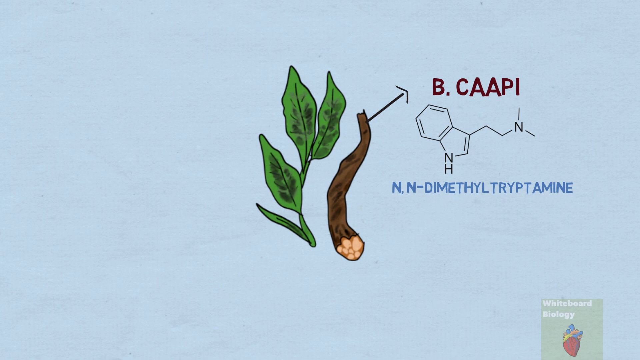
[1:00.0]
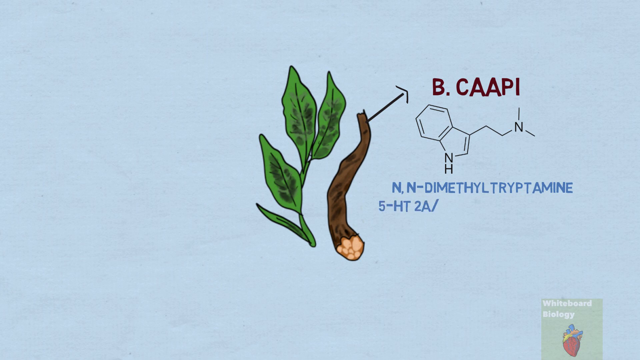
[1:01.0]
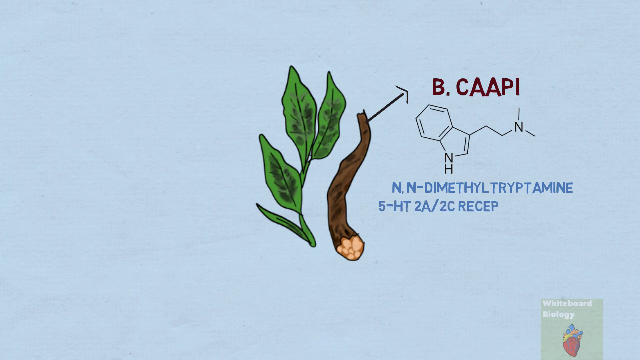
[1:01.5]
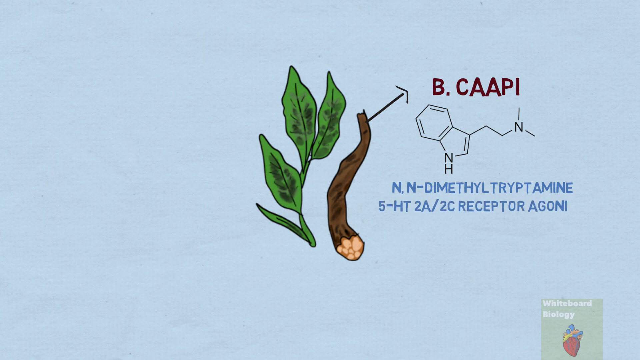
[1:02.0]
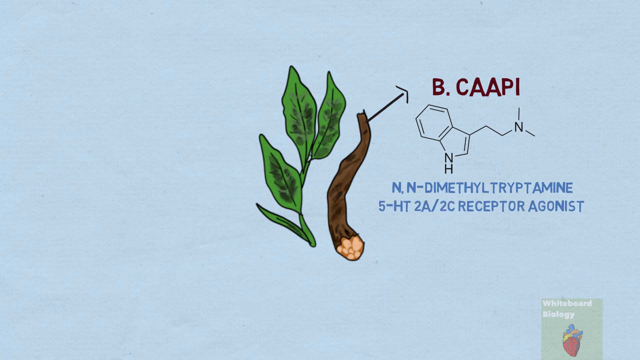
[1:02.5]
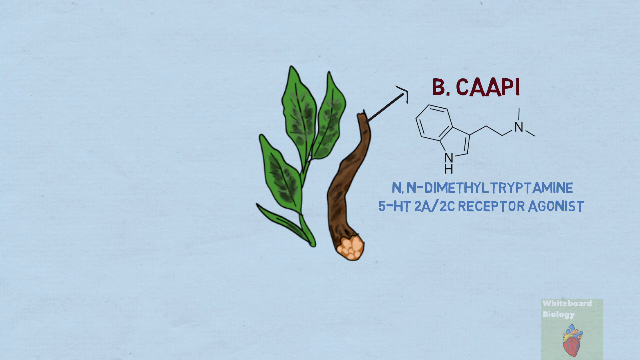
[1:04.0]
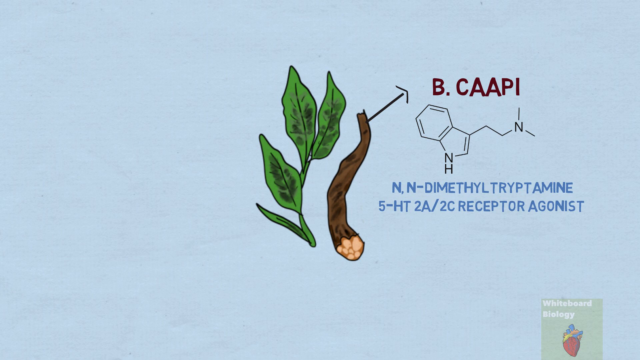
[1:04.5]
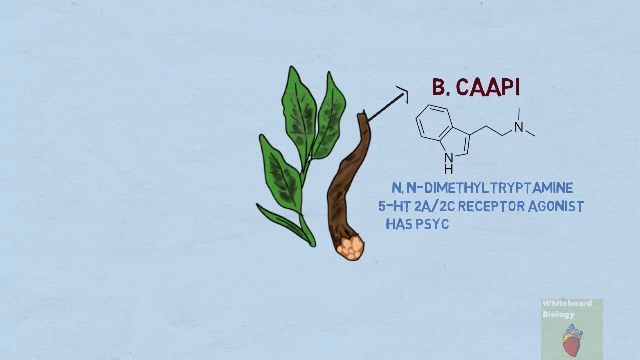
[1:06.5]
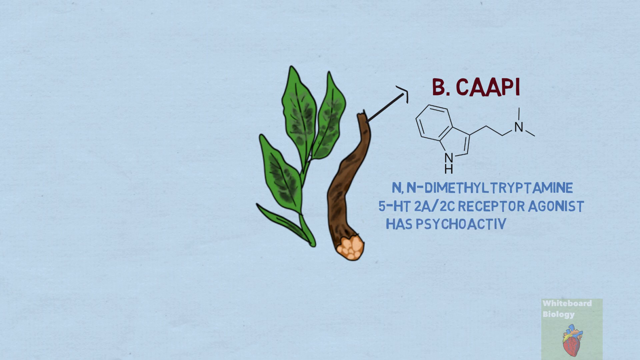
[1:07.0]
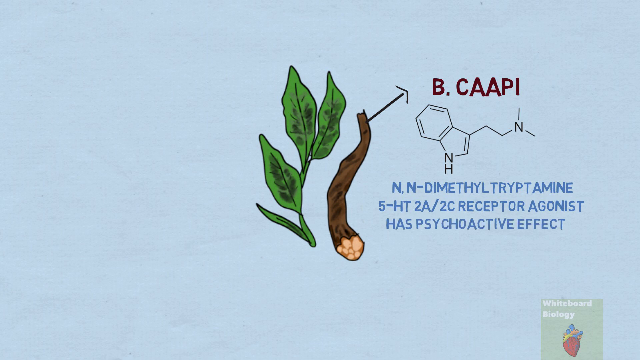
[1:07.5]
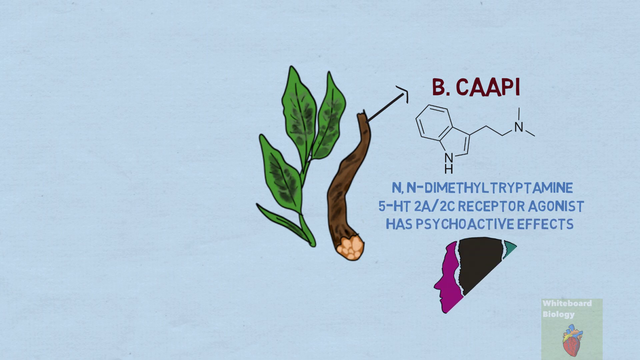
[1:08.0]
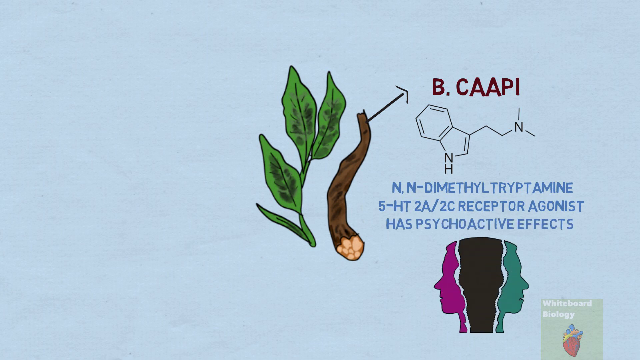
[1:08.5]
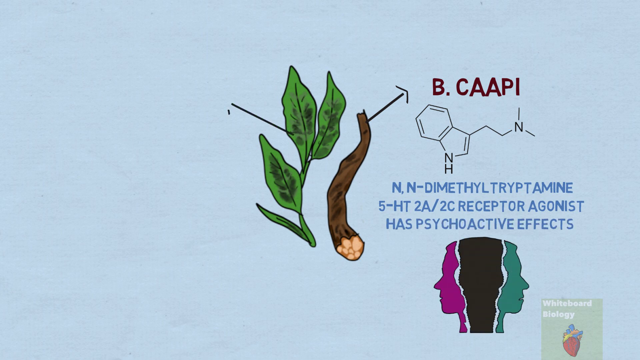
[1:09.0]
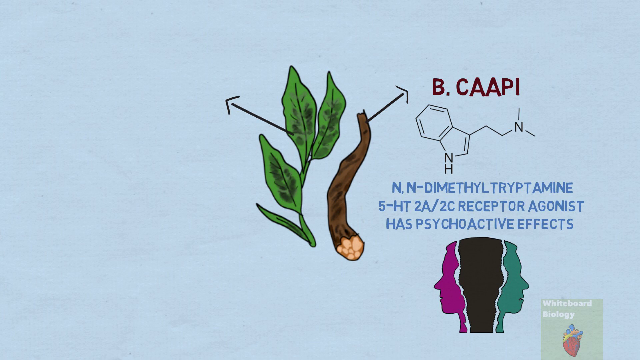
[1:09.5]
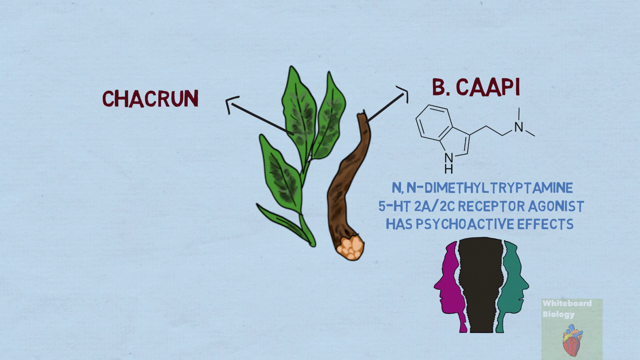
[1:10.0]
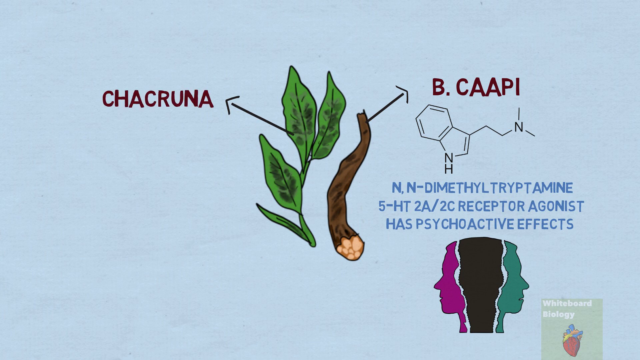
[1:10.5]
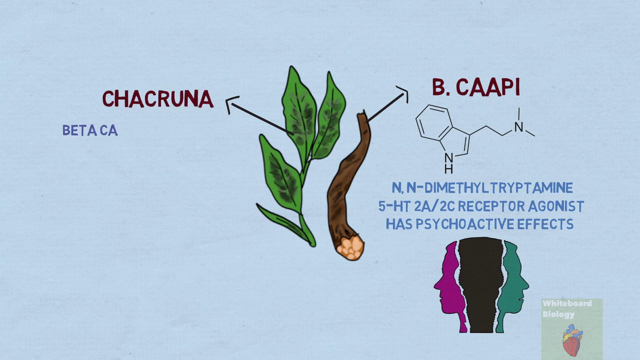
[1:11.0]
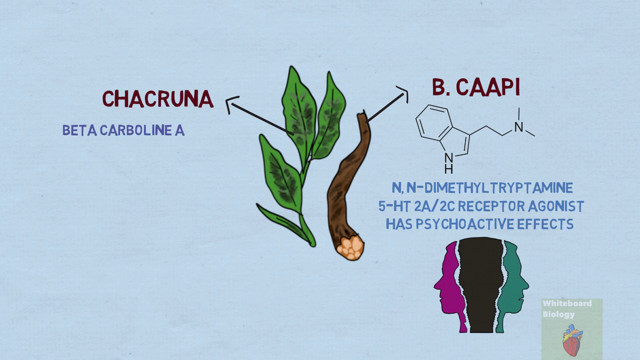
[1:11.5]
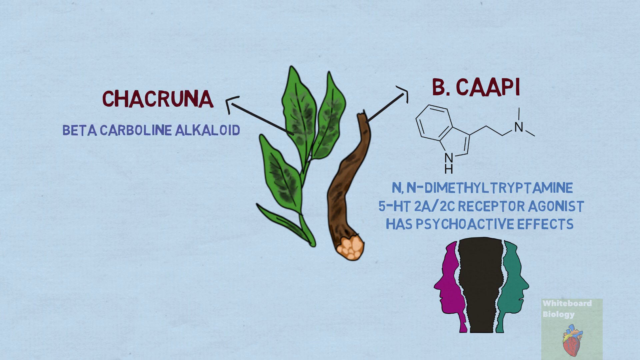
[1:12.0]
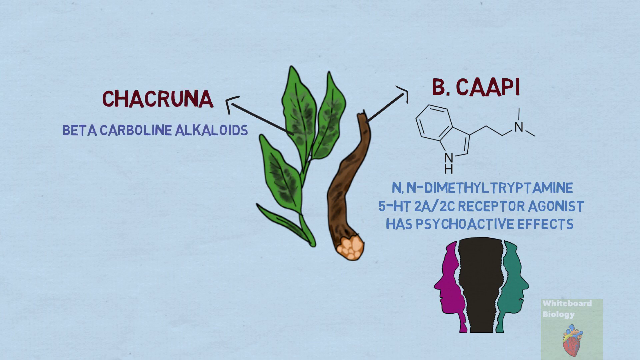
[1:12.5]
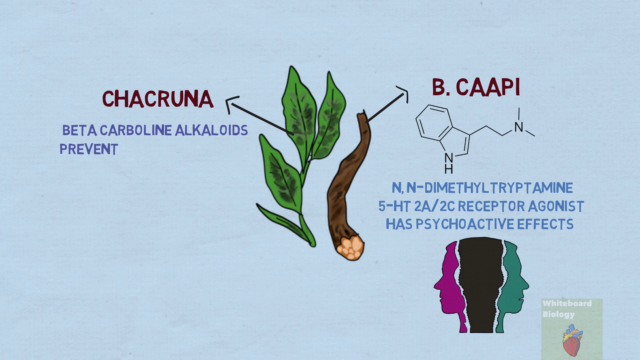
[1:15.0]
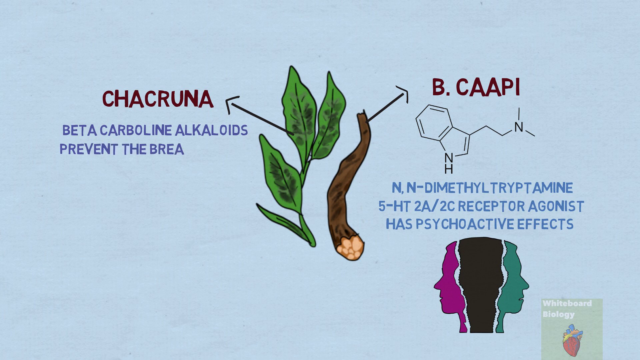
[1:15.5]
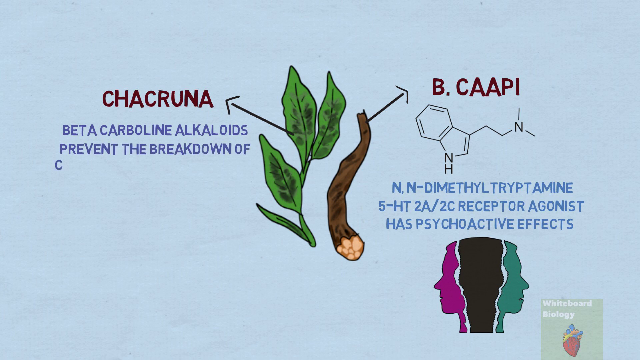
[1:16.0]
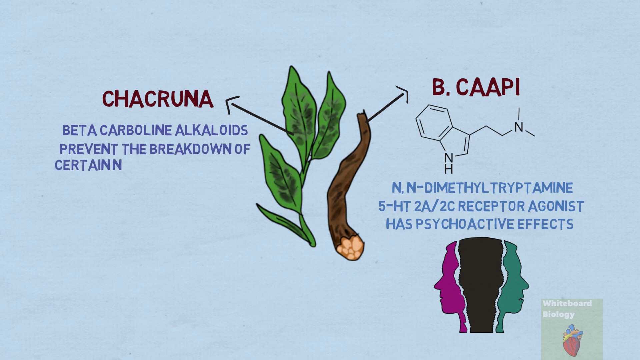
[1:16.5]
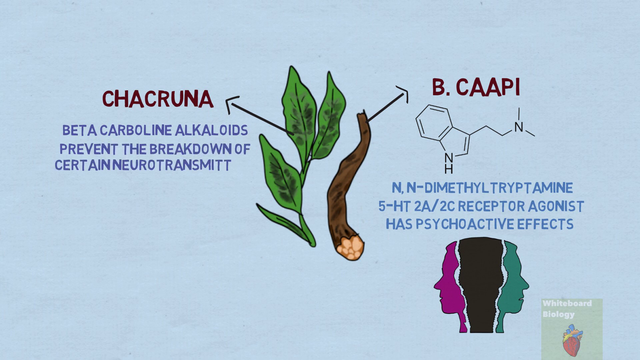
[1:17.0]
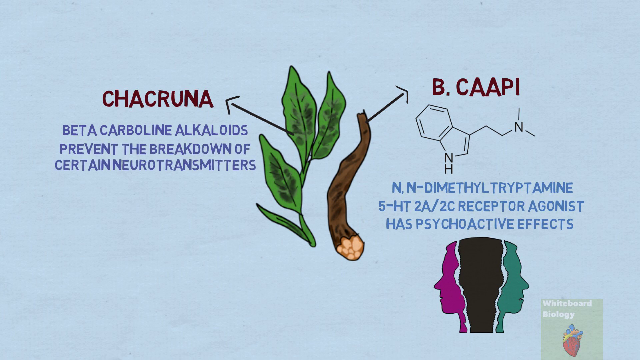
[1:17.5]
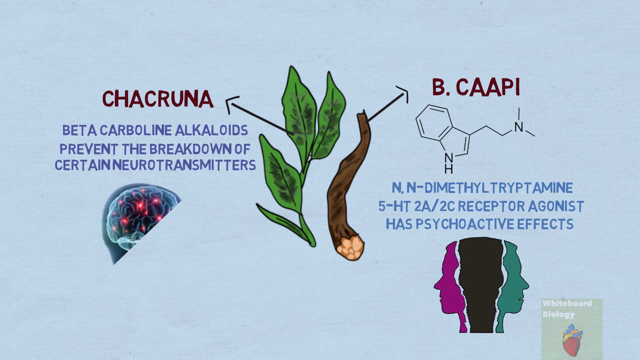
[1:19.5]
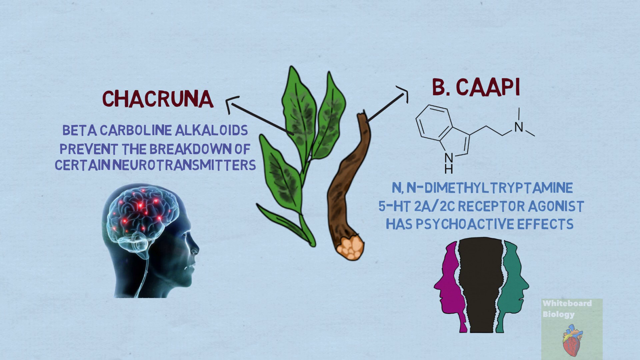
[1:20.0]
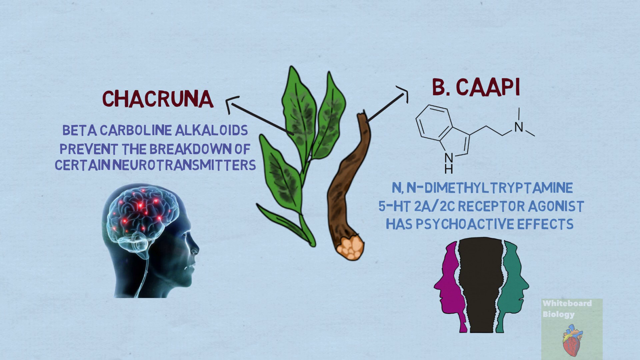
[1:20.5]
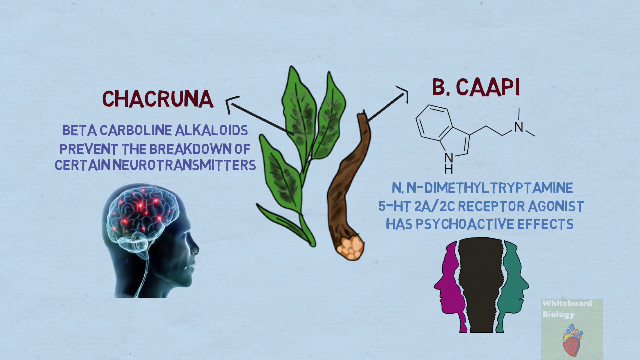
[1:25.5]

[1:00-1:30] A diagram of the plant is shown, apparently about its chemistry and science. The words on it are not in simple English. Below it there is an image of a human head, and the area in between is black.